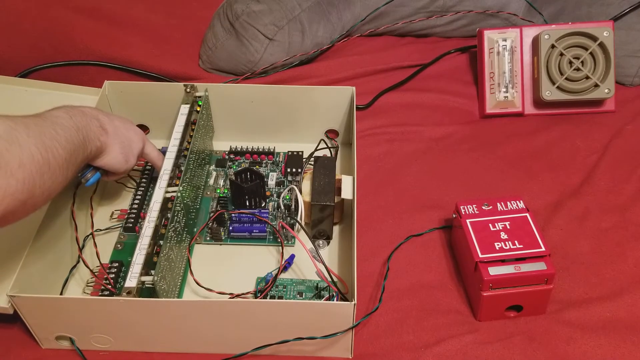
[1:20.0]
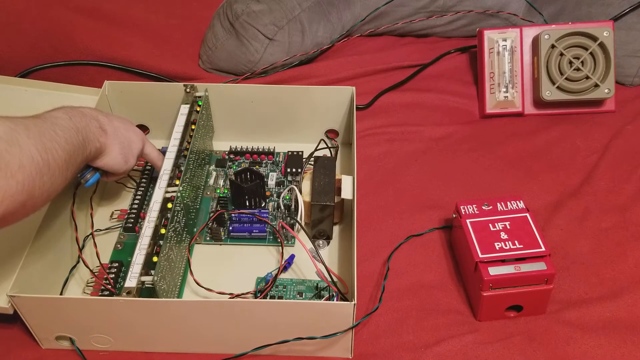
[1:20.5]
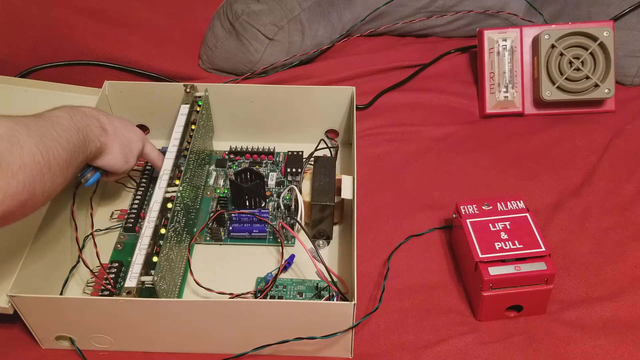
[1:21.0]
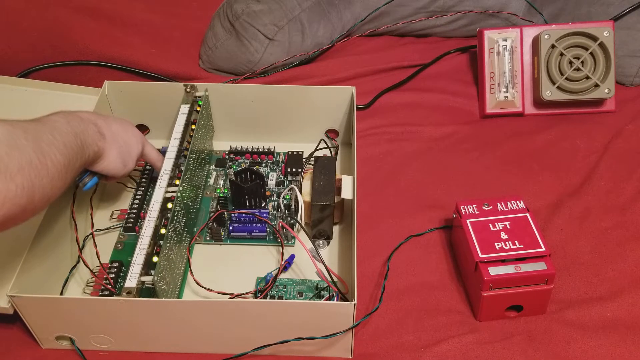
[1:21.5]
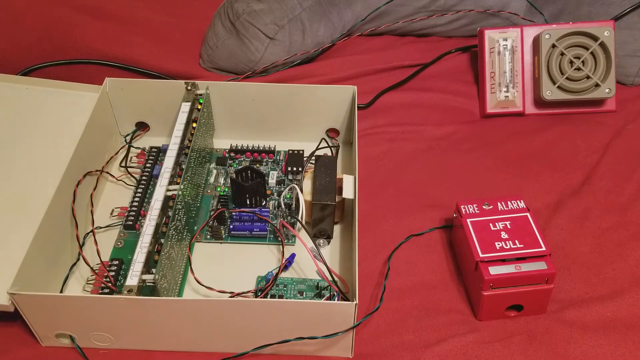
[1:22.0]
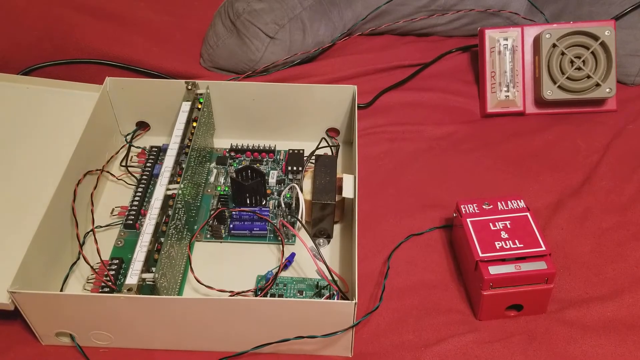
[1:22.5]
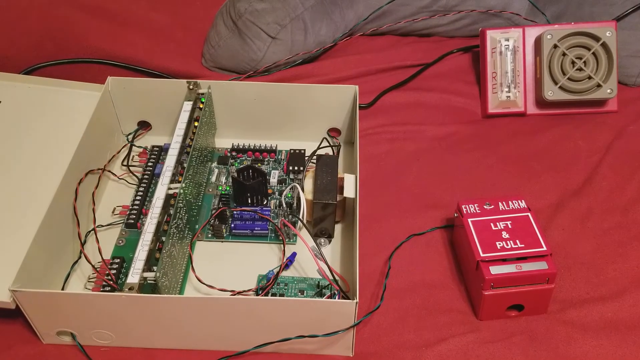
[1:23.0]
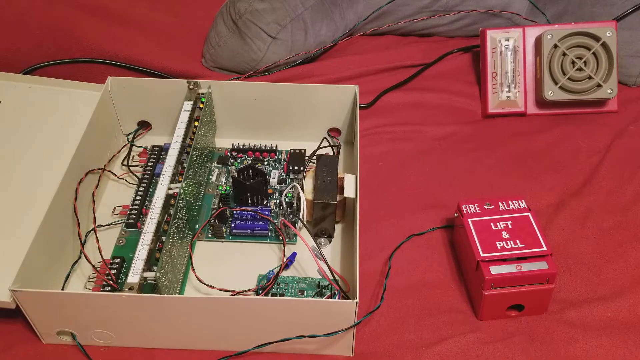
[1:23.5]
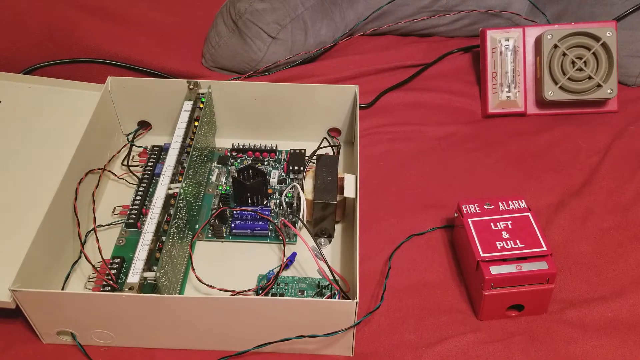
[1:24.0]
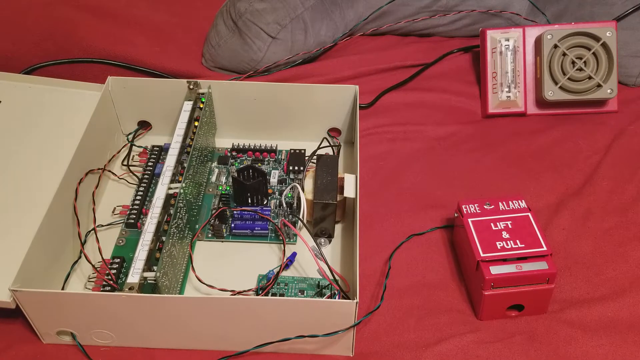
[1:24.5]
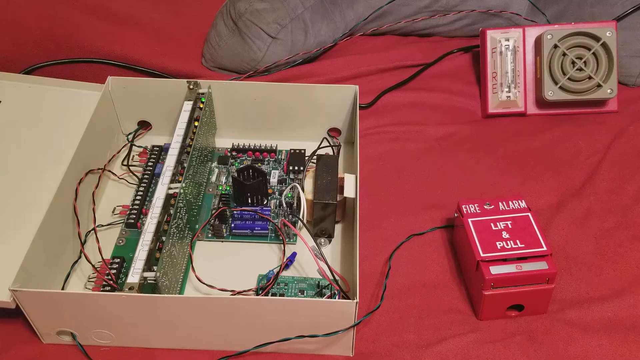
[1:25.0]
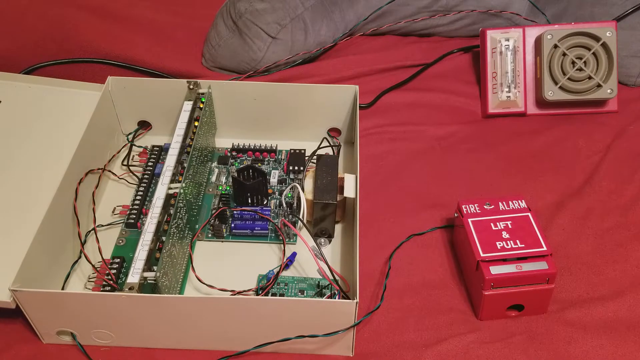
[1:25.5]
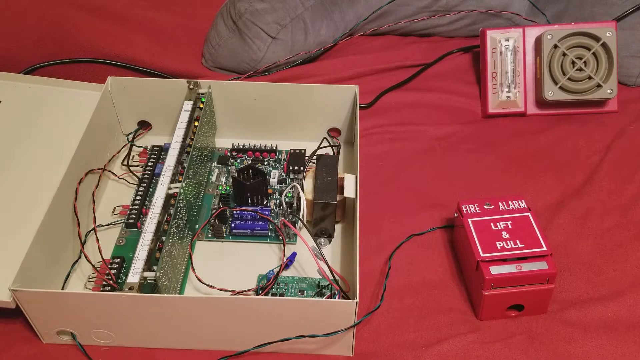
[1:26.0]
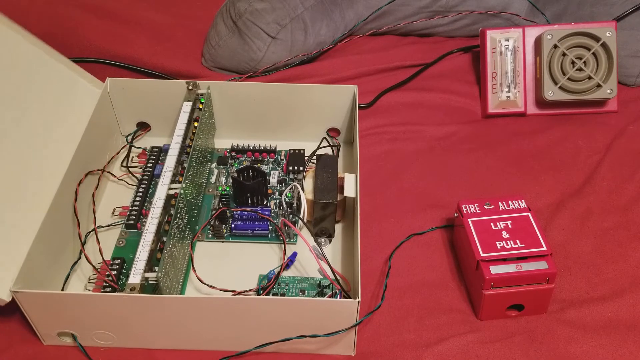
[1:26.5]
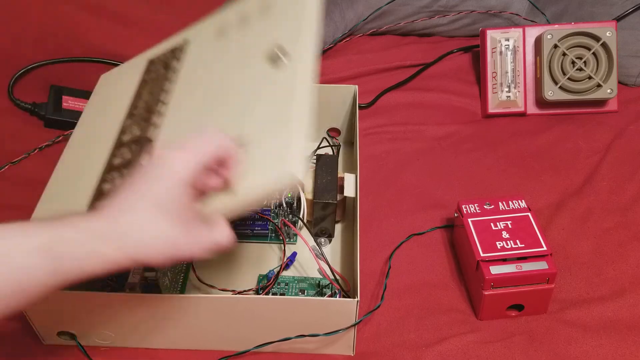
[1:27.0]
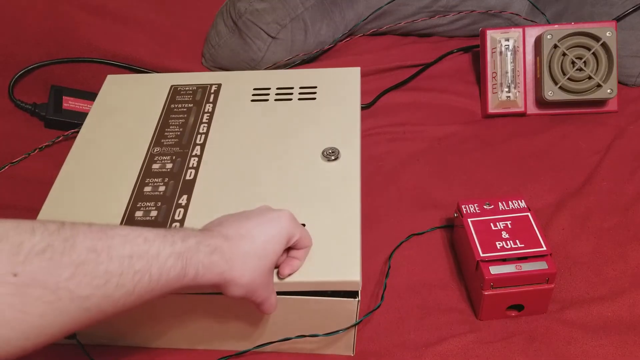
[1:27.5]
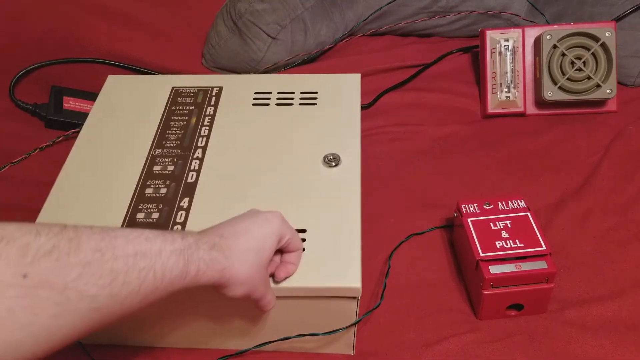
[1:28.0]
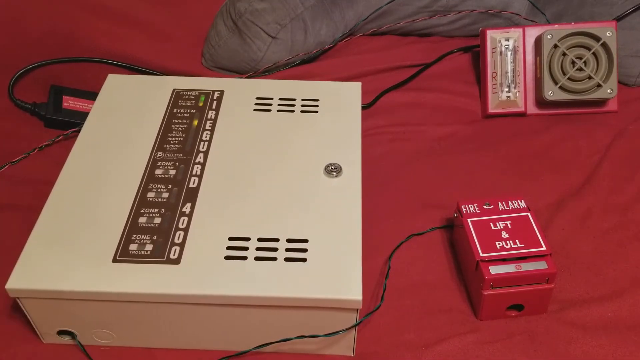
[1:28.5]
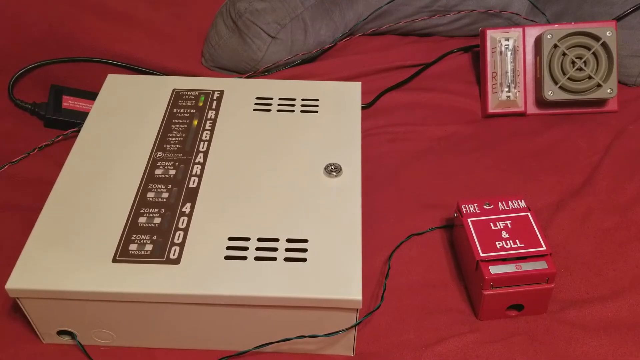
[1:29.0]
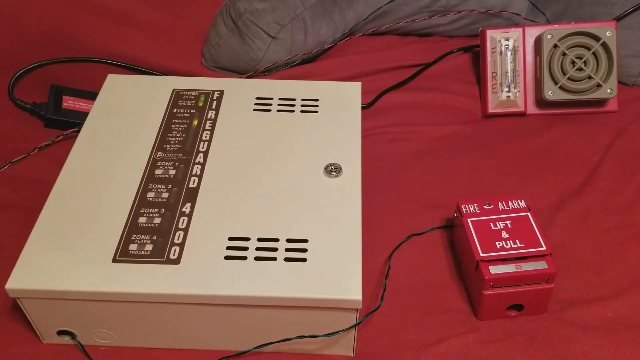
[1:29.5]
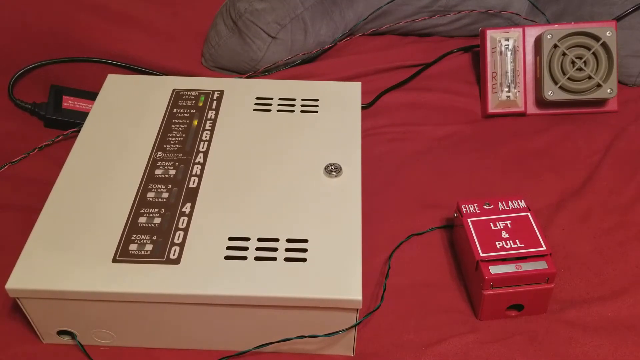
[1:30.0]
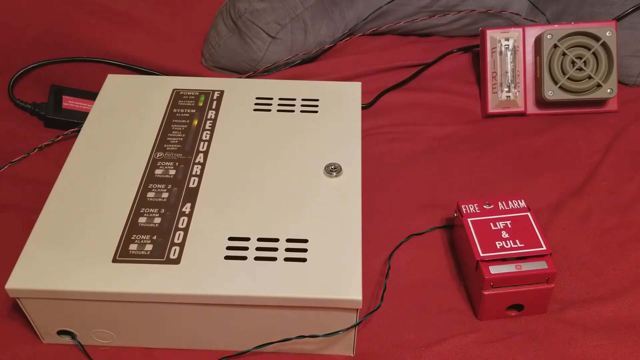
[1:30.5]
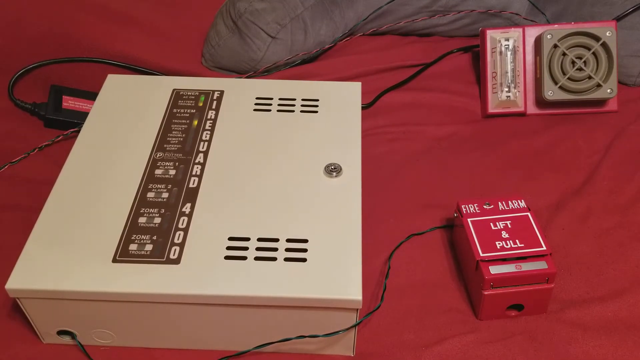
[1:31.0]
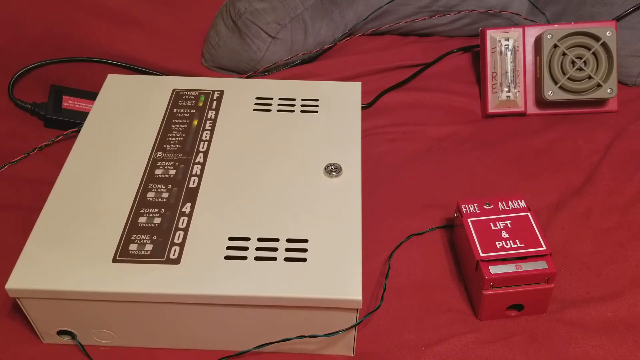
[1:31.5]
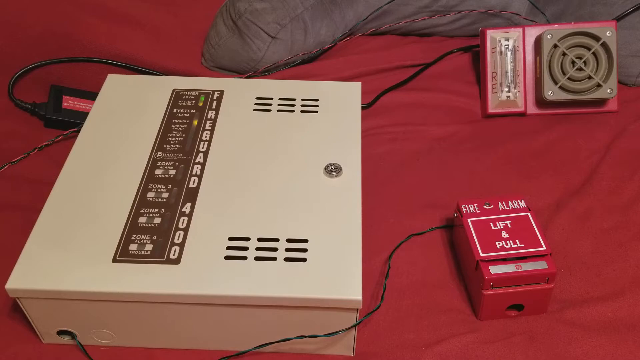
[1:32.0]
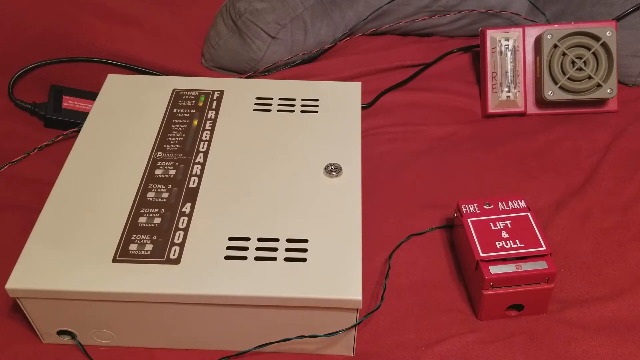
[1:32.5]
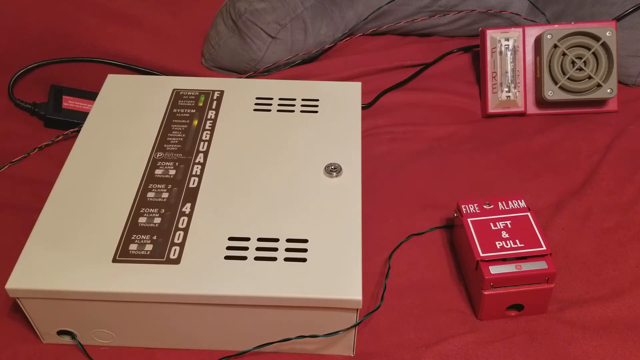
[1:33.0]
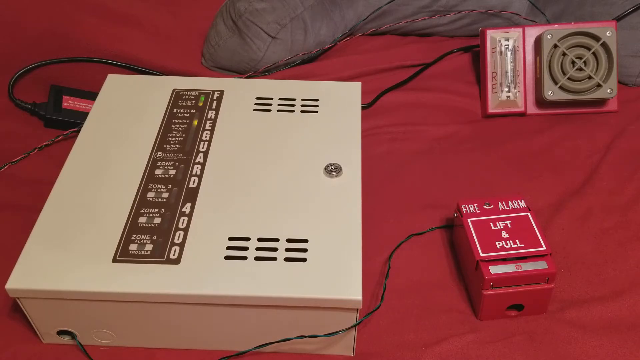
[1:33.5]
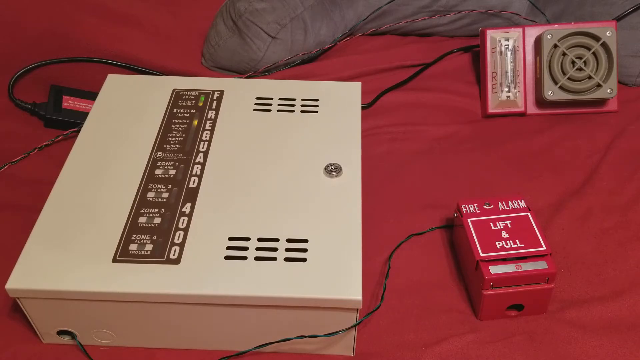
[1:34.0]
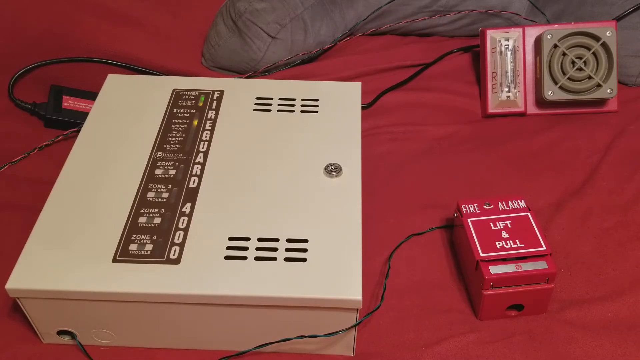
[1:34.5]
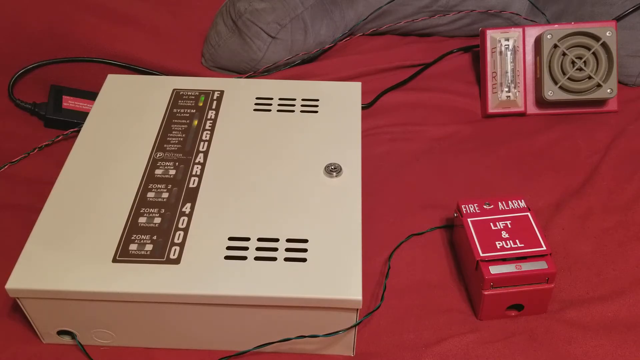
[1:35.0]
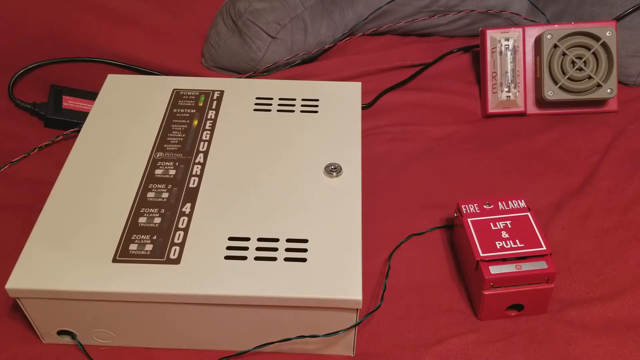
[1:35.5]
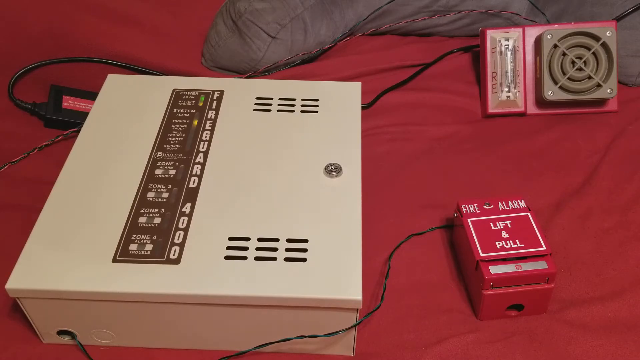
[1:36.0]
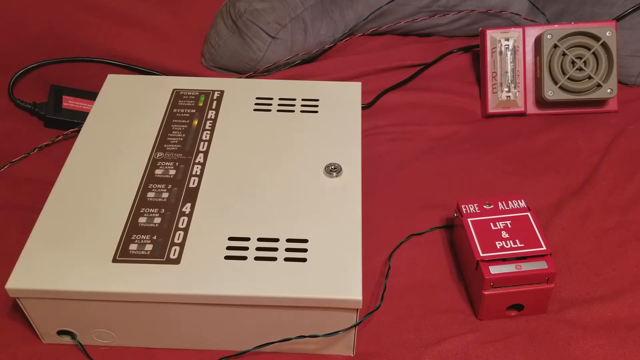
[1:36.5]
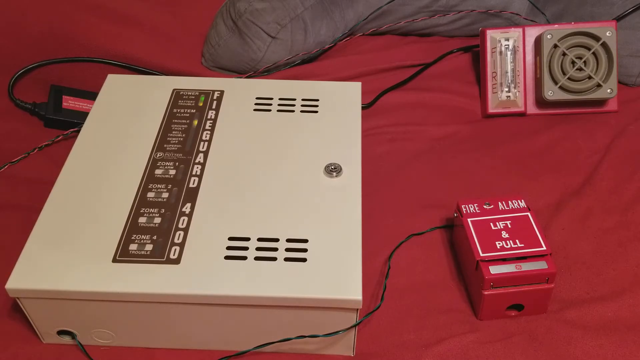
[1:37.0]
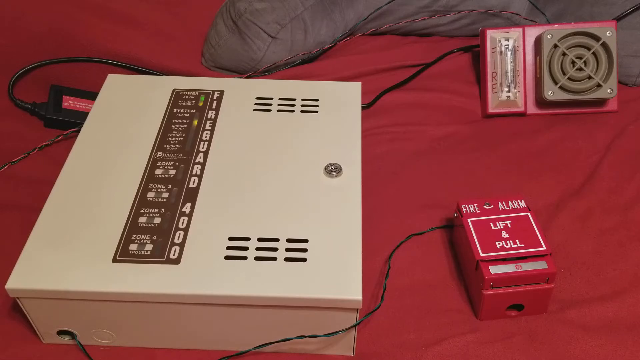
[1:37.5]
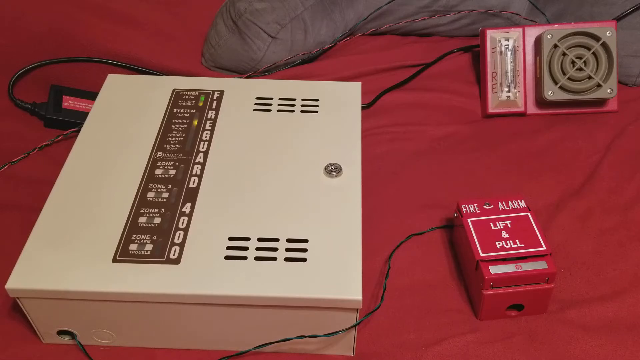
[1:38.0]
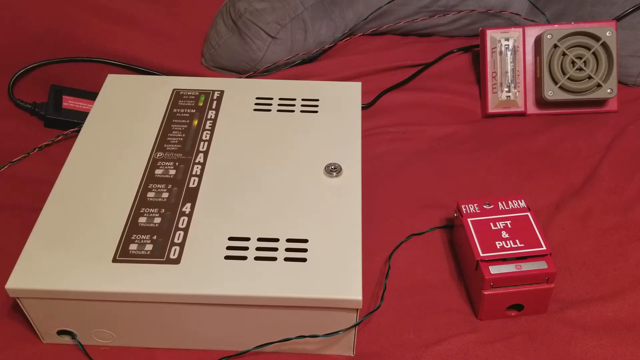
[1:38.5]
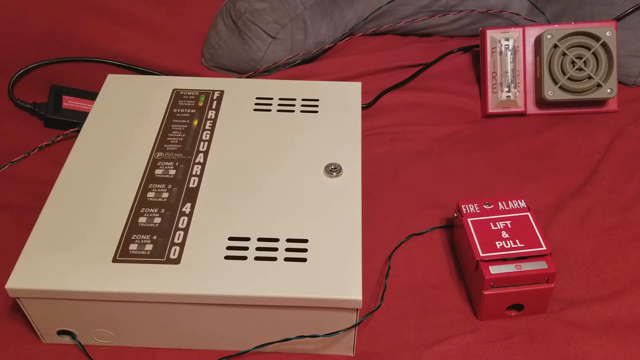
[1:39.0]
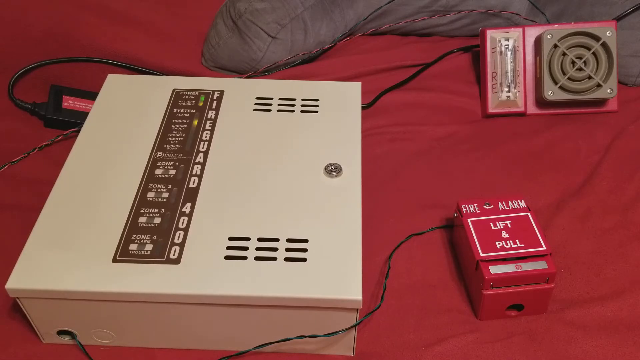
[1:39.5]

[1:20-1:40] The person releases the button, and the yellow flashing largely stops. Apart from the one light under the System category that has been flashing yellow since the beginning, the lights that were flashing red and then yellow are no longer flashing, and the bright white light no longer flashes in the room. The person closes the main box with their left hand, pressing the cover down. The box then remains shut, with the original yellow light still flashing and the yellow and green power lights staying on, while nothing else happens.